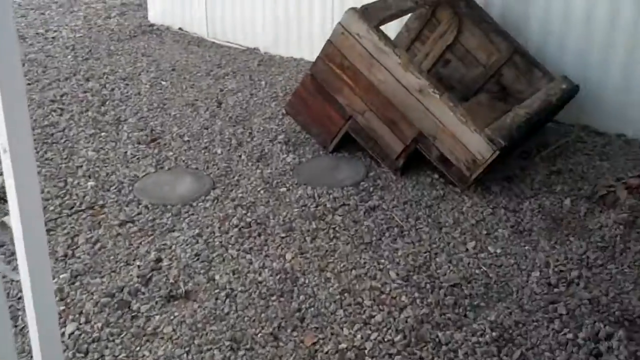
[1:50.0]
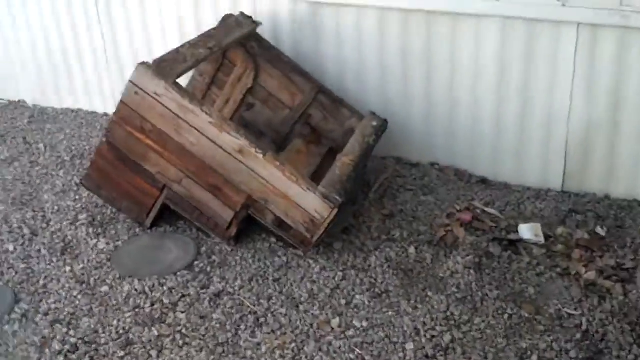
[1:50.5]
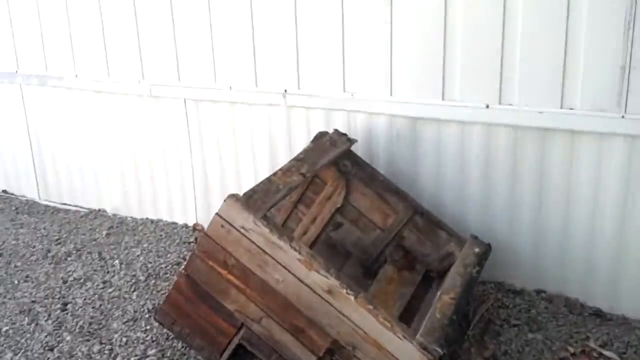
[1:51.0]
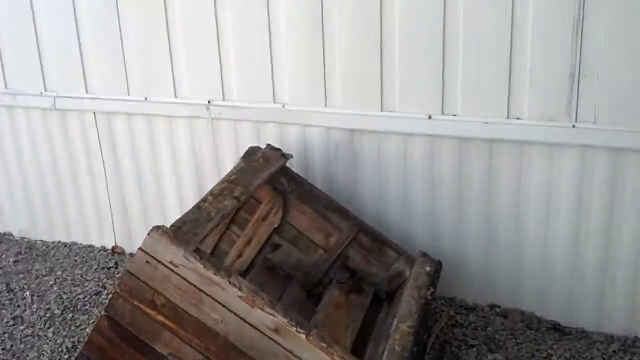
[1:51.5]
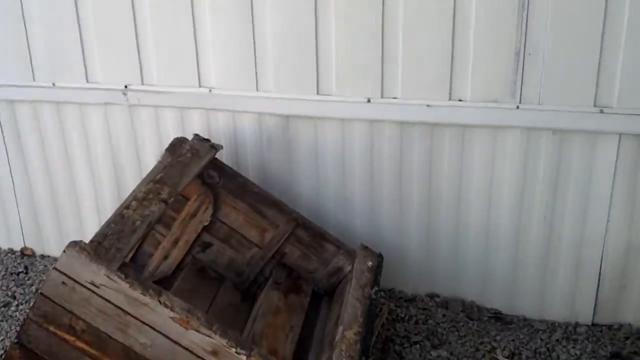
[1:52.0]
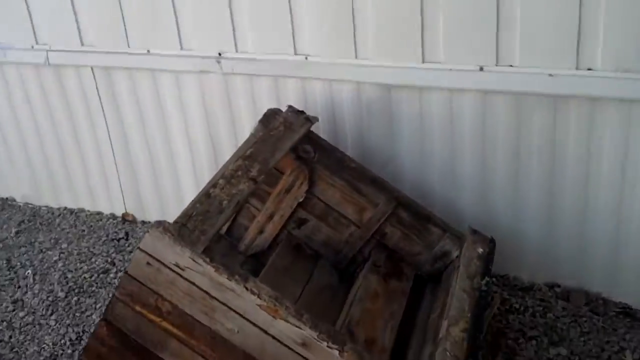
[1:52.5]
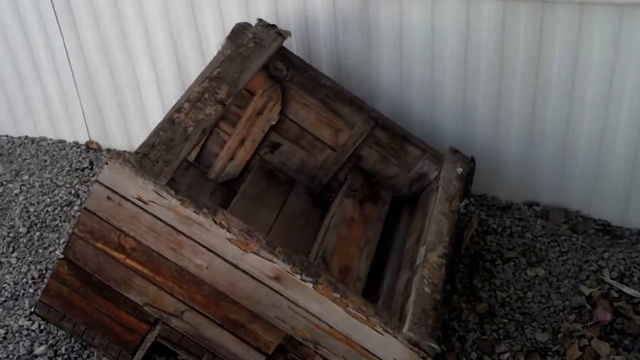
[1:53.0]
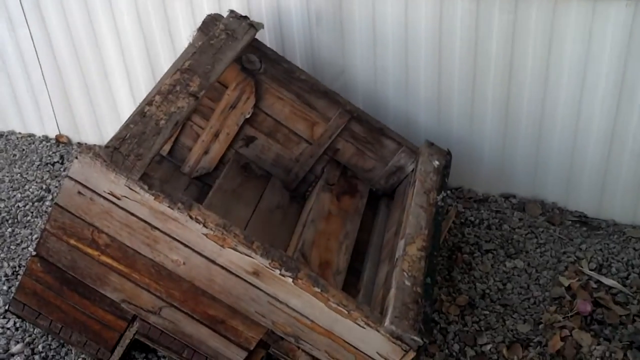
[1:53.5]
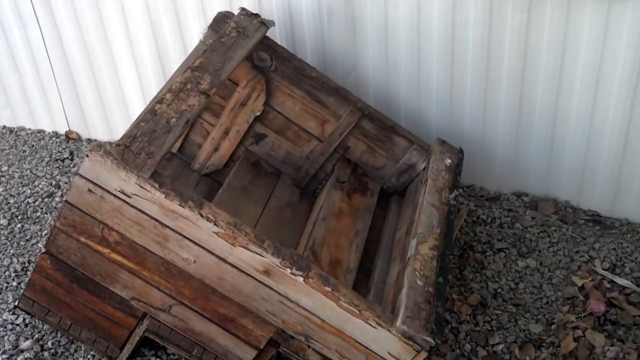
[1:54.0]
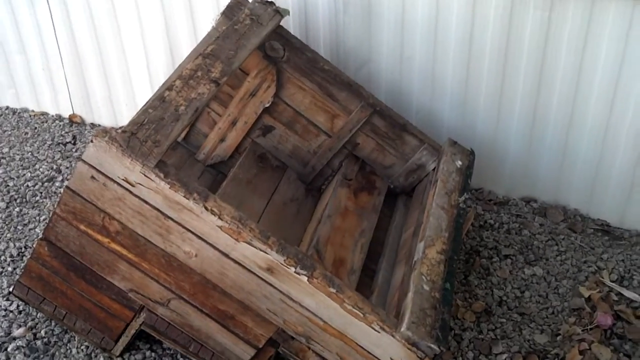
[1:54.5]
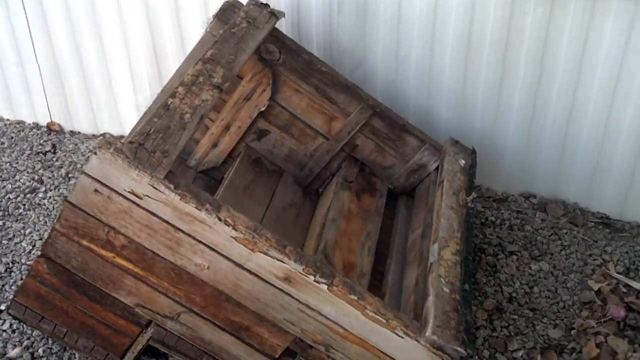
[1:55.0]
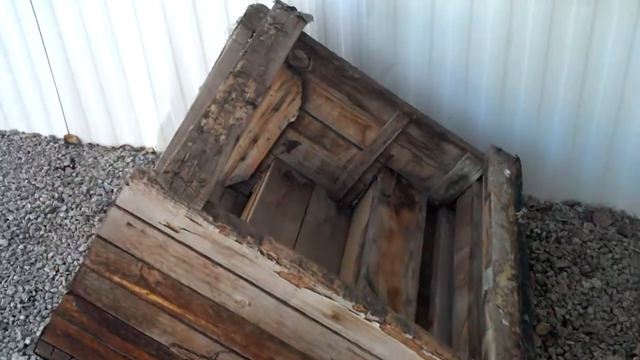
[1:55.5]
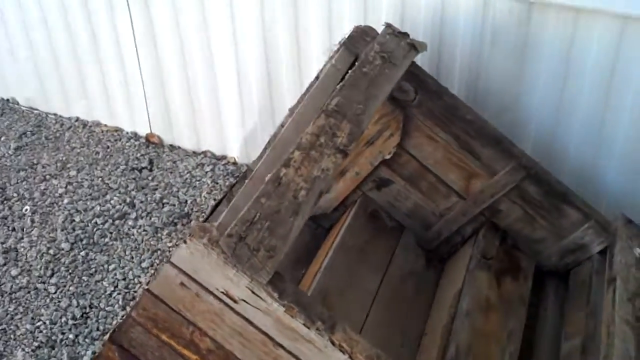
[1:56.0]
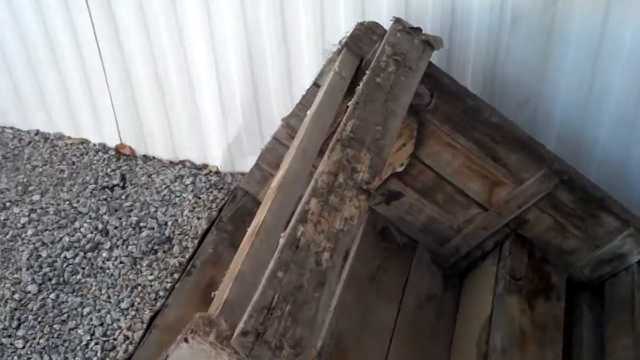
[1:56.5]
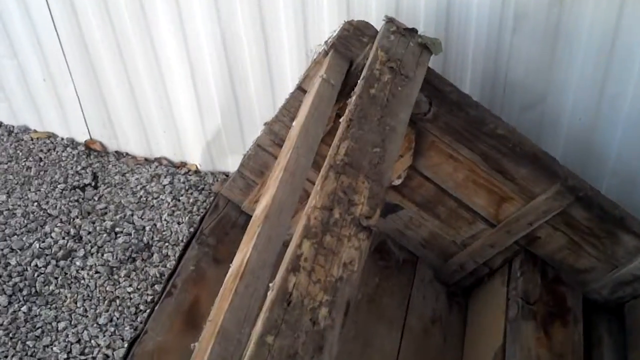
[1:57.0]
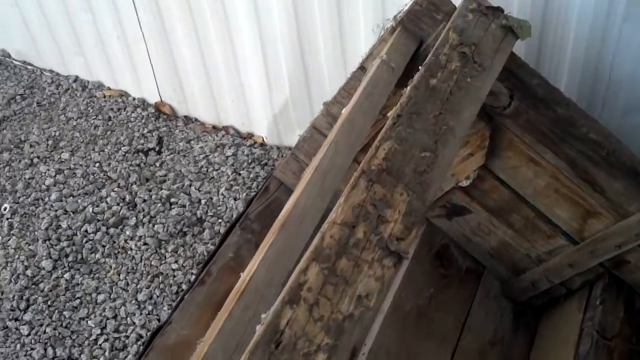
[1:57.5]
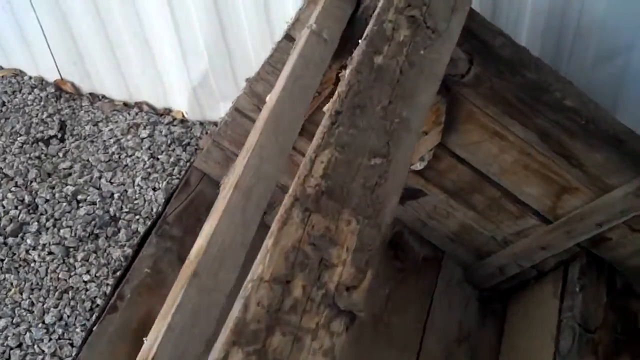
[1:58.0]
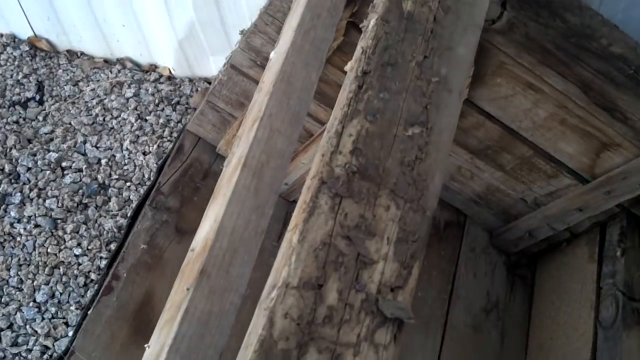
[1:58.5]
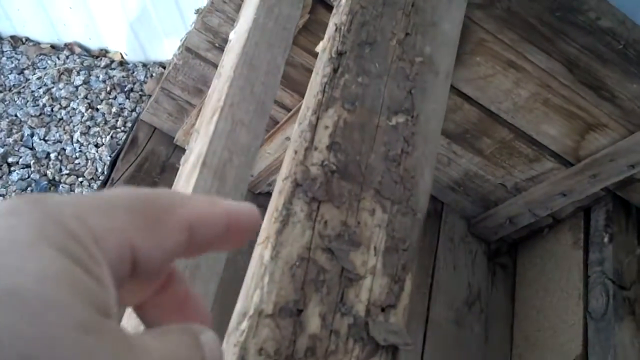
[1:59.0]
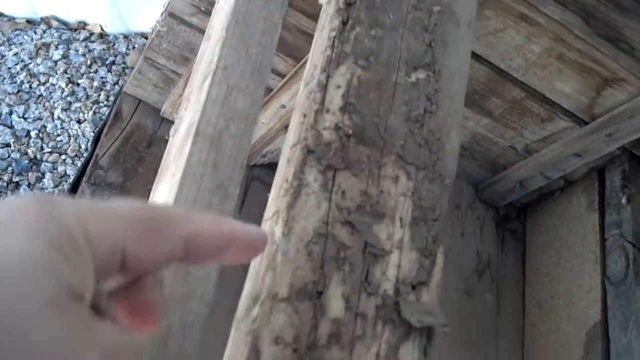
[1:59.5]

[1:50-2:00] The camera walks toward the overturned steps, apparently focusing on similar decay underneath them; they may have been steps leading to the porch. A hand comes in from the lower left and points to the decay and rot, which looks more like wood rot or maybe termites. The set of three overturned steps is probably about two feet wide and appears stained darker brown at the top, more faded toward the lower, longer step. It is next to the white house. The covering below where the siding stops, over the crawl space, is almost like a thin, wavy aluminum, apparently painted white.